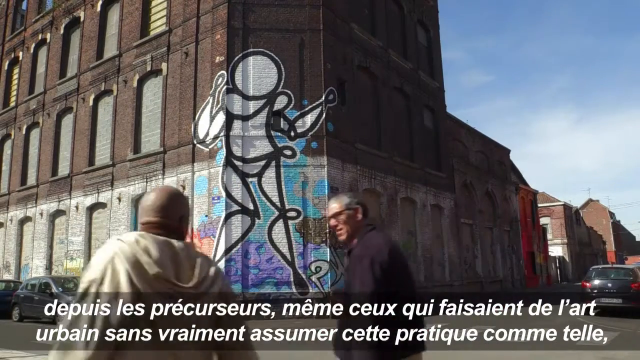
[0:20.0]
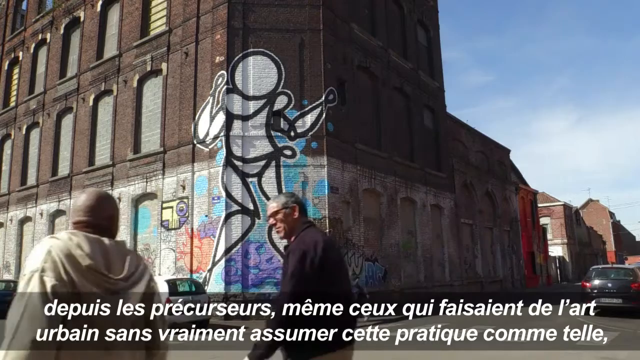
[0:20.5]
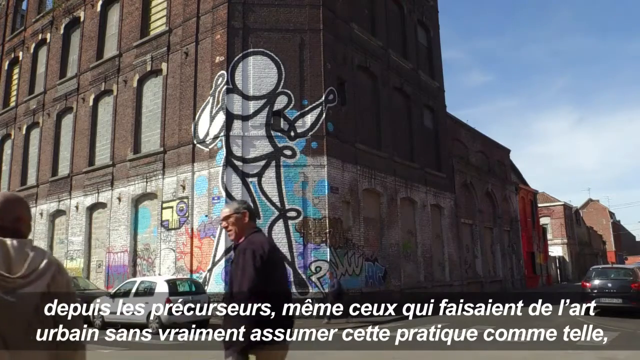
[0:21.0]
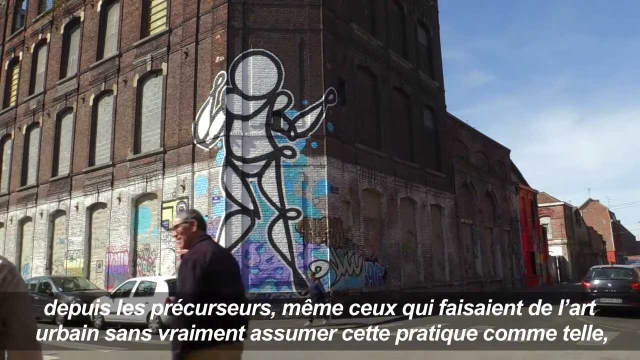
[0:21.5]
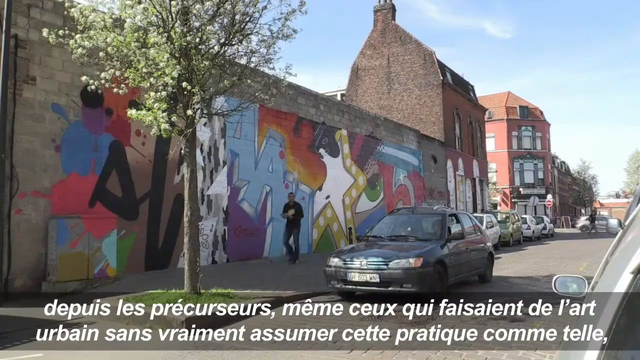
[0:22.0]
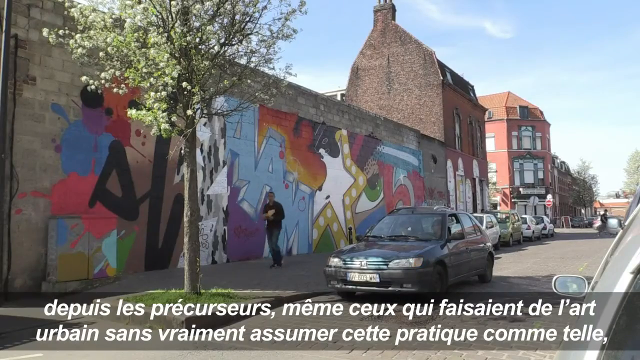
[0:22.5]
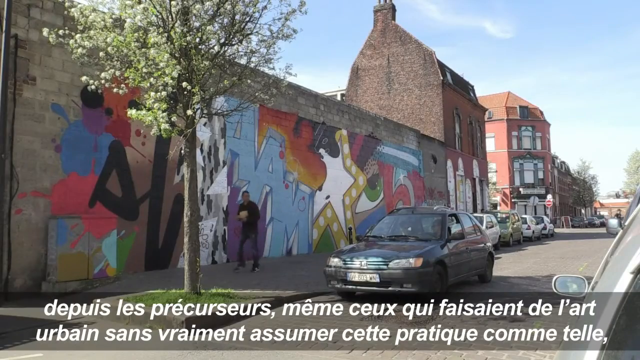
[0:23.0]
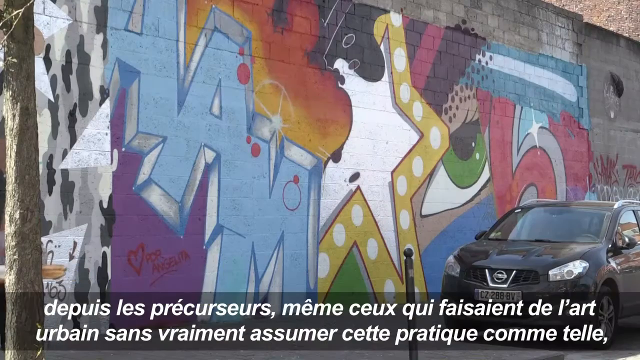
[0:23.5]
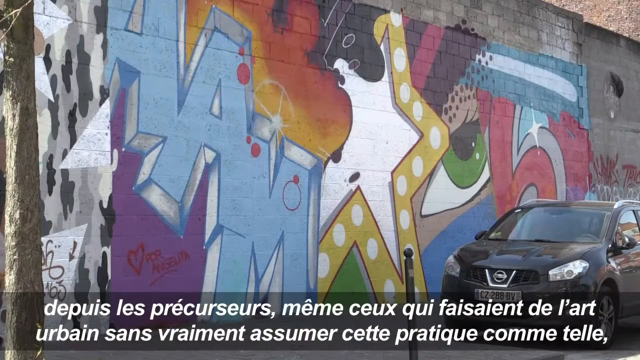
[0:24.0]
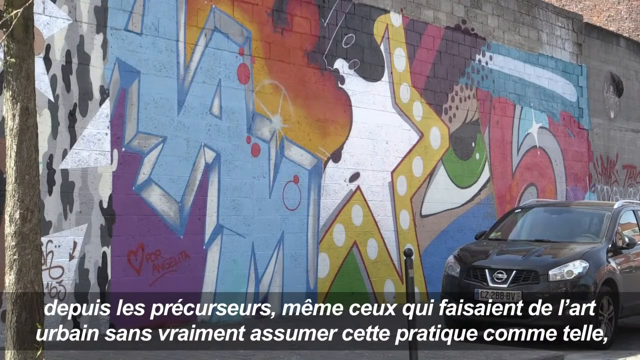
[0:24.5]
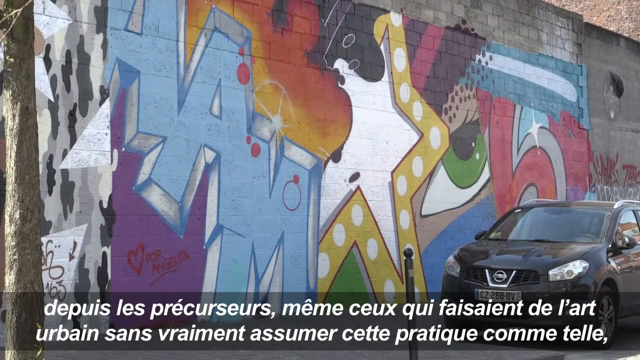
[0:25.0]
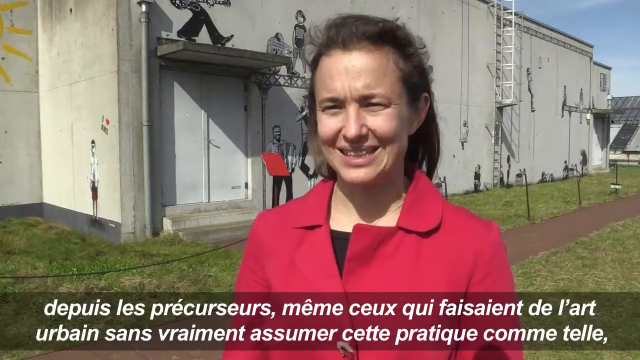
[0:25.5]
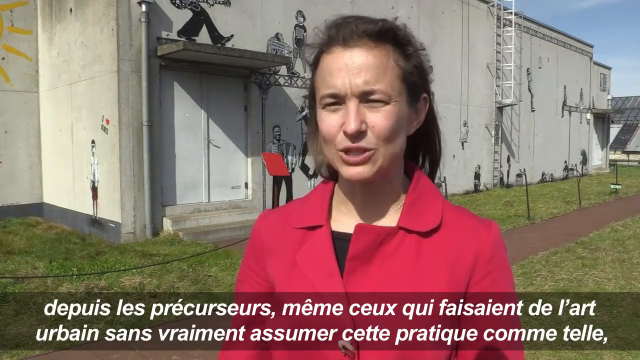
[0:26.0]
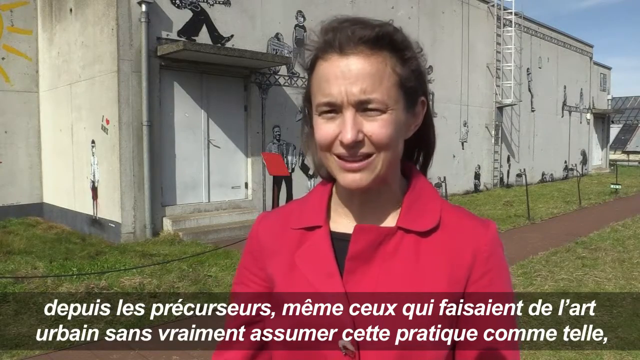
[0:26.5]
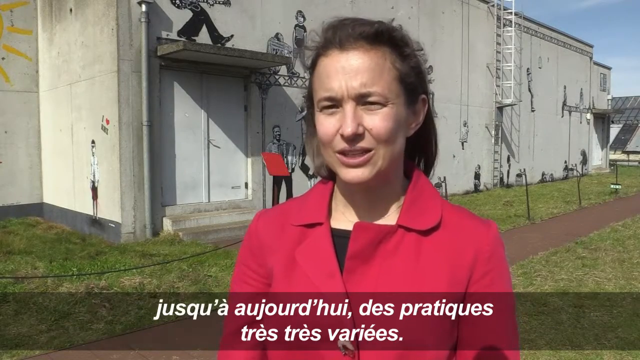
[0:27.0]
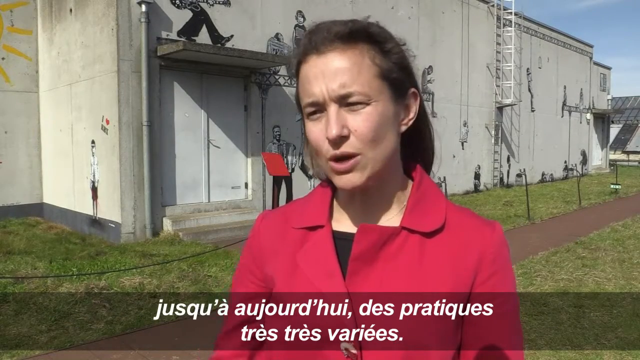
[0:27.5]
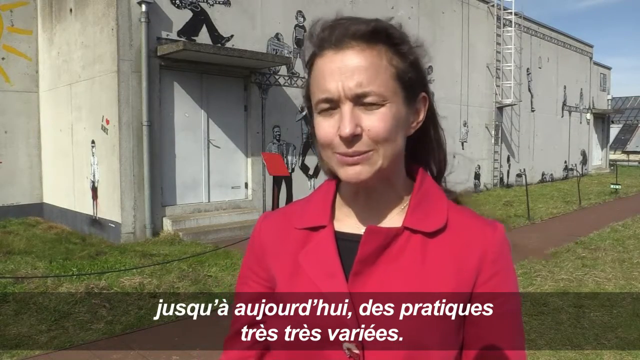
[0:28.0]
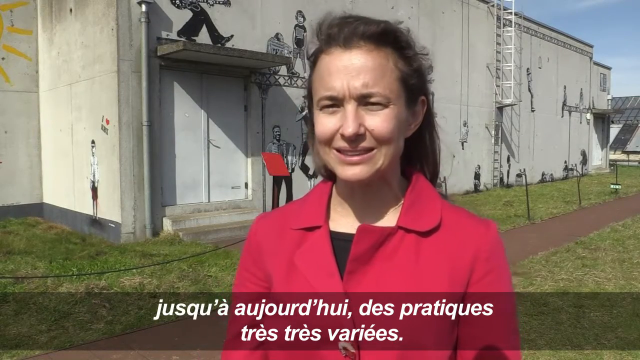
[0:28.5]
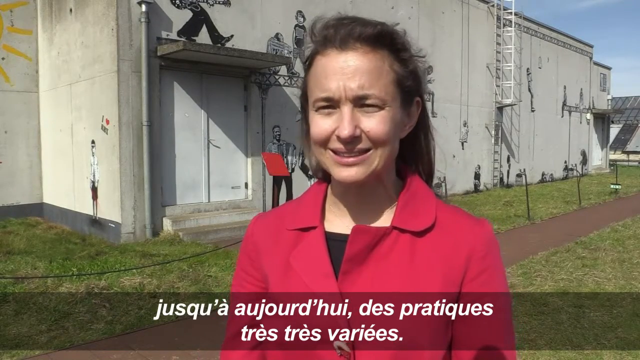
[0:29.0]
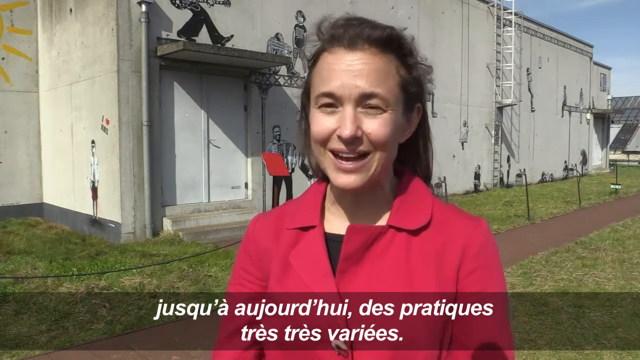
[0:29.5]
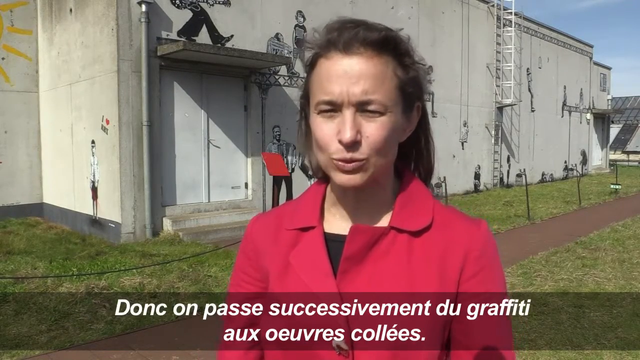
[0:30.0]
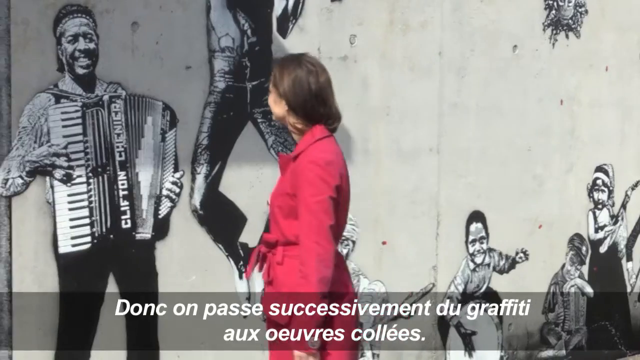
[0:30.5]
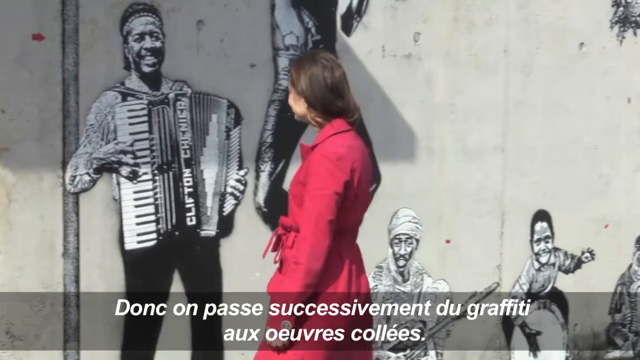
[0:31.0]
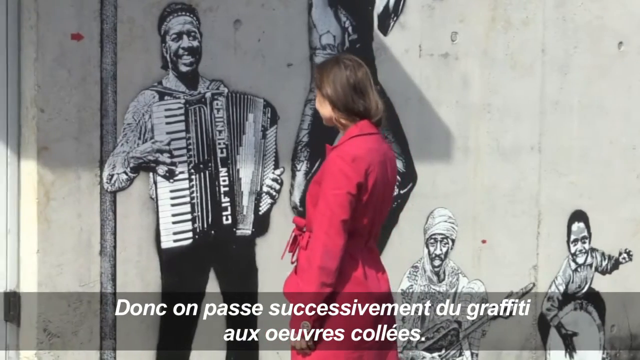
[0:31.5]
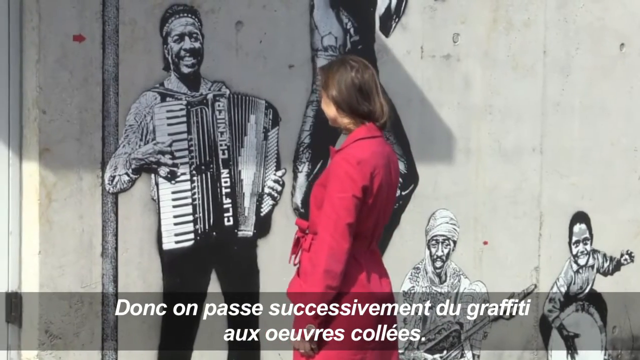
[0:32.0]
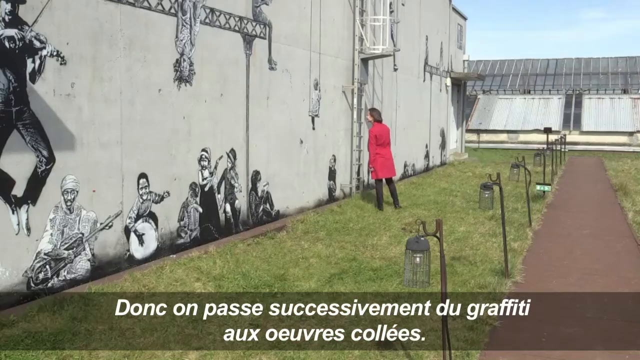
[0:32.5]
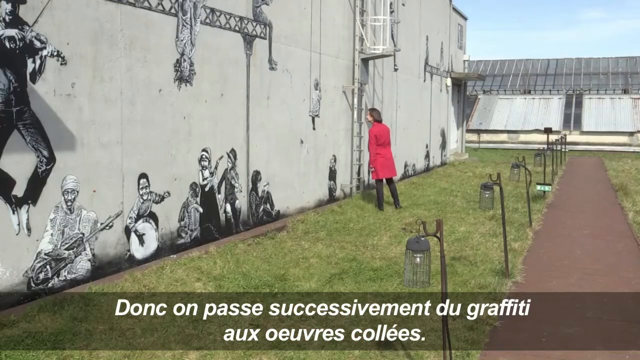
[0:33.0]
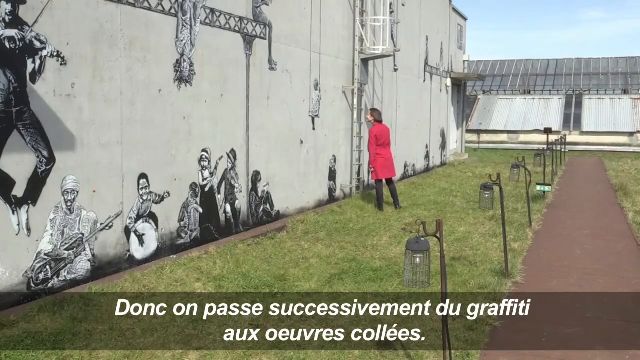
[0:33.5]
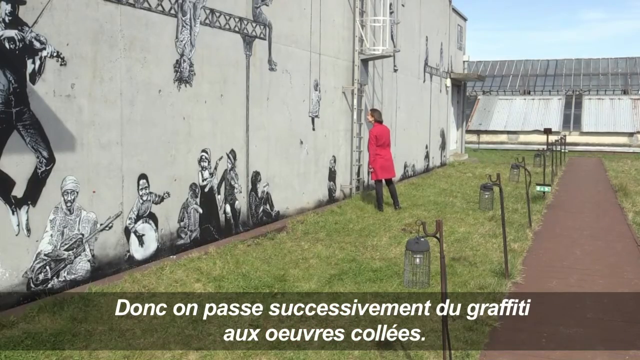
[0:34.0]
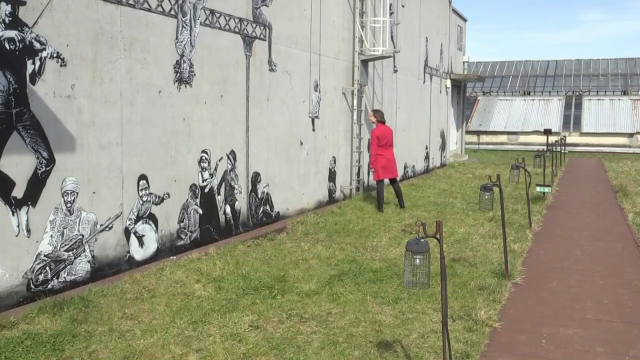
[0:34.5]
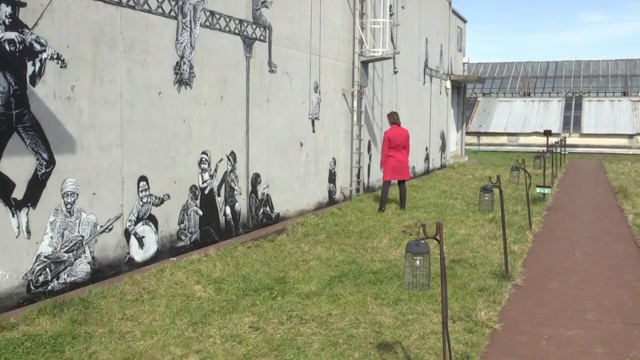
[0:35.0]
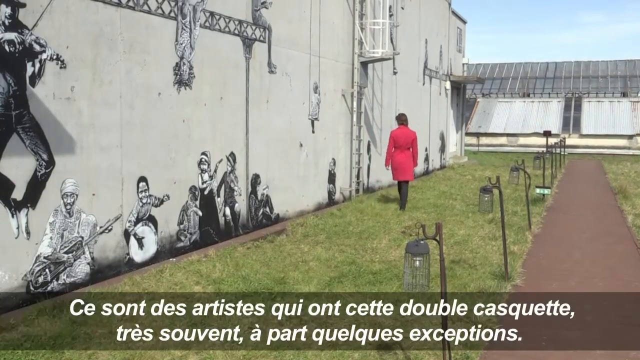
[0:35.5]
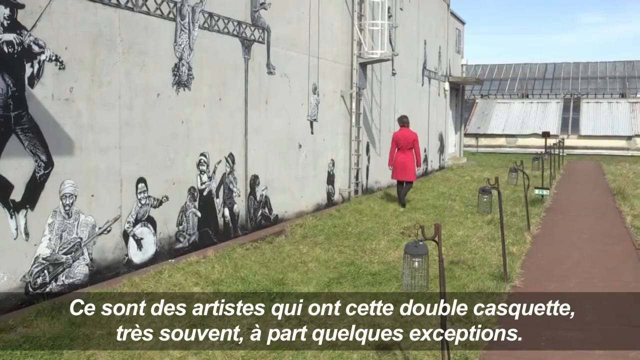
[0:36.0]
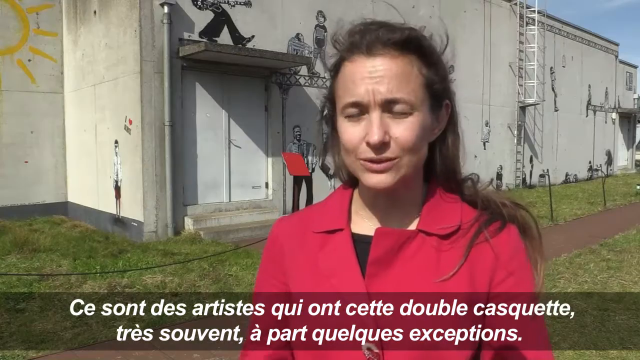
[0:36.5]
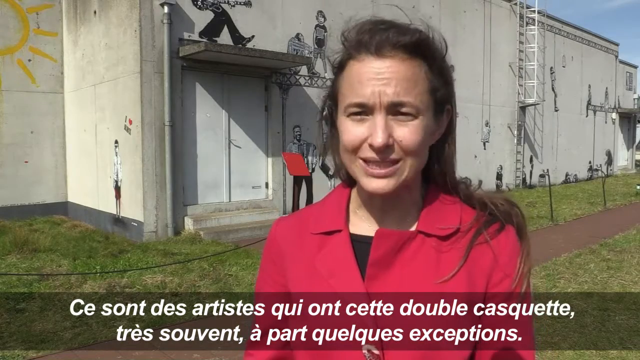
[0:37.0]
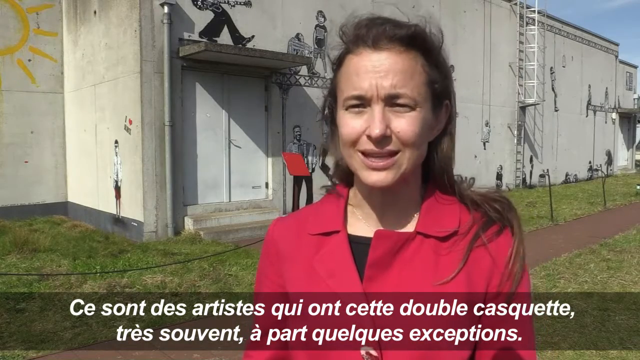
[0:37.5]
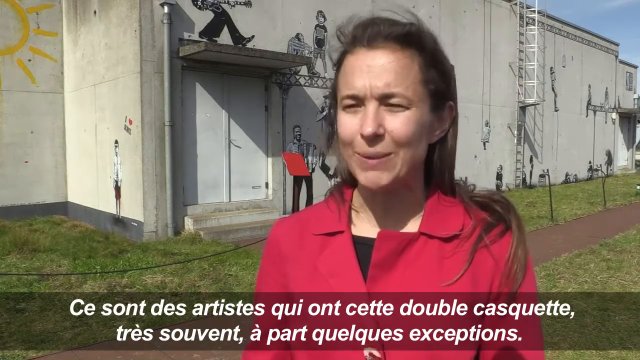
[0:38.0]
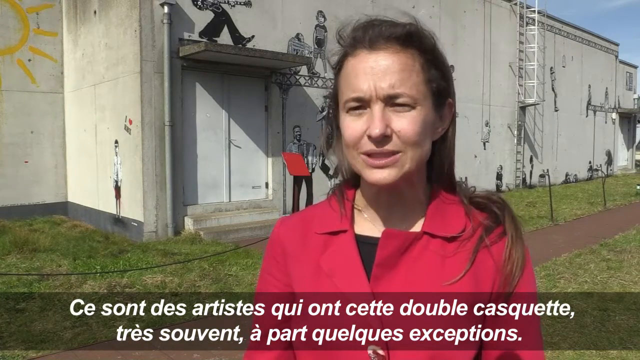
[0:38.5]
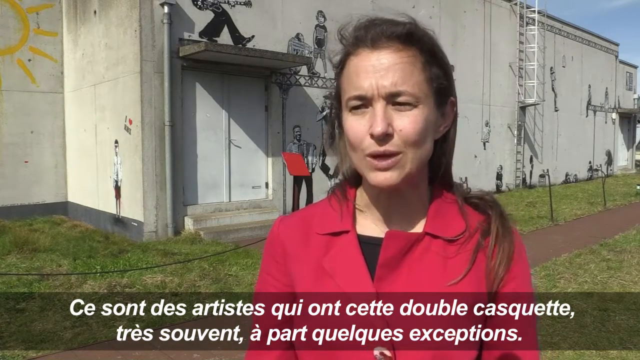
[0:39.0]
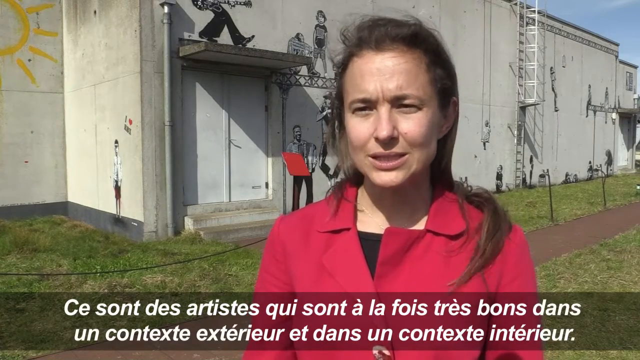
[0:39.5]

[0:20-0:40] An old building with some graffiti on it is shown, and two elderly men walk past it. Another part of the city appears: a huge wall covered in colorful graffiti, with a tree in front of it. Some cars are on the side of the road, and a man walks on the sidewalk. A close-up view of the art follows. Magda is then seen walking and scouting a building. Most of the graffiti on this building is black and white, with nothing colorful at all, and most of the art depicts people playing musical instruments. The building looks very old. A few night lights are on the side behind Magda. The camera then focuses on Magda once again, and it looks like she is being interviewed.